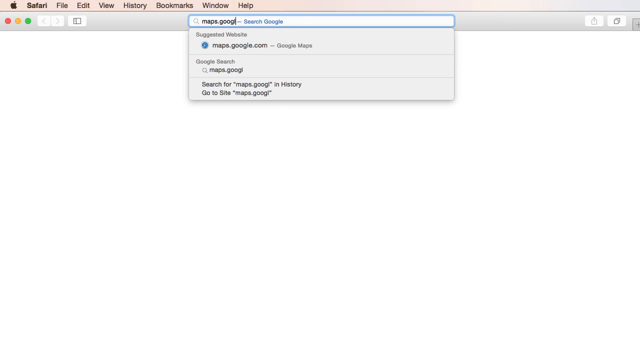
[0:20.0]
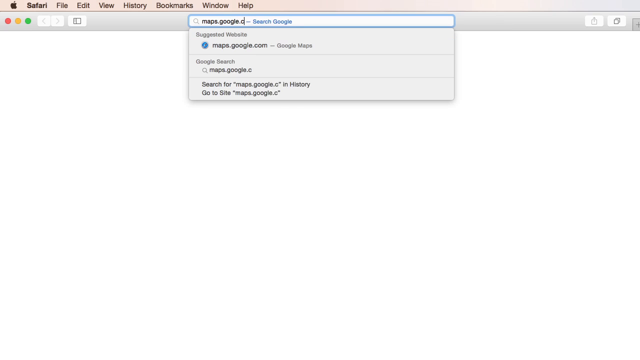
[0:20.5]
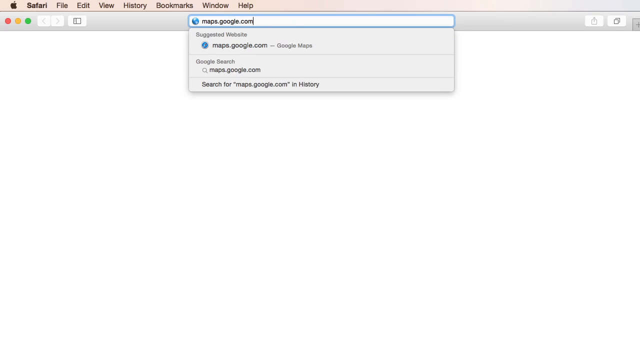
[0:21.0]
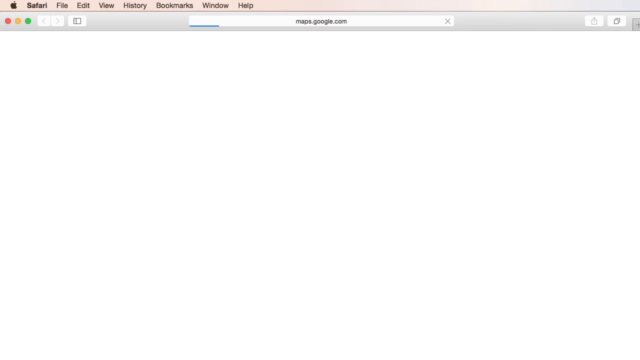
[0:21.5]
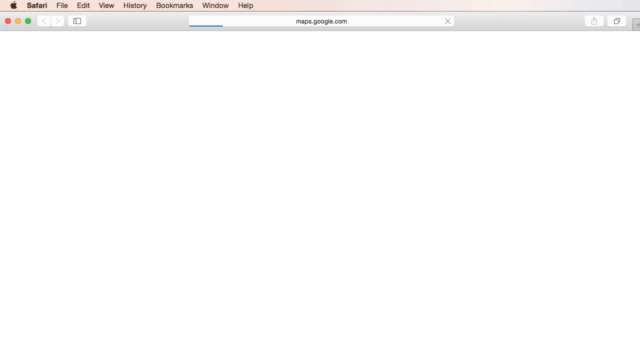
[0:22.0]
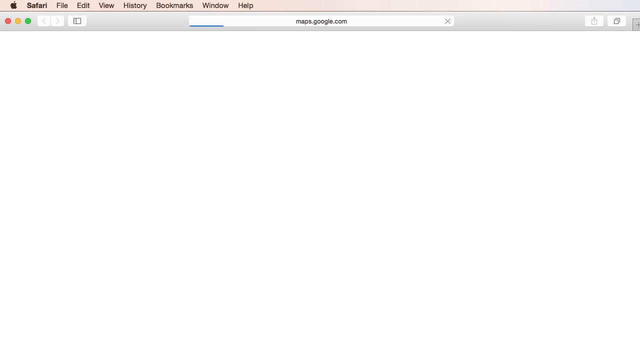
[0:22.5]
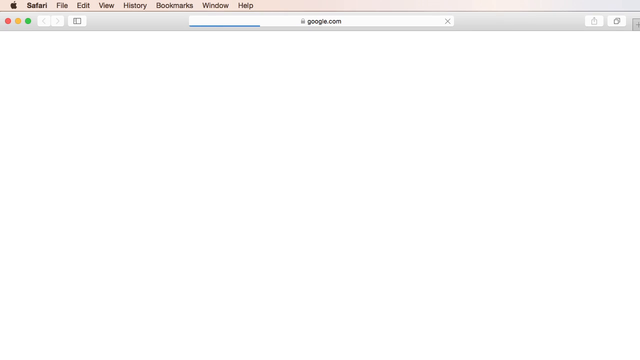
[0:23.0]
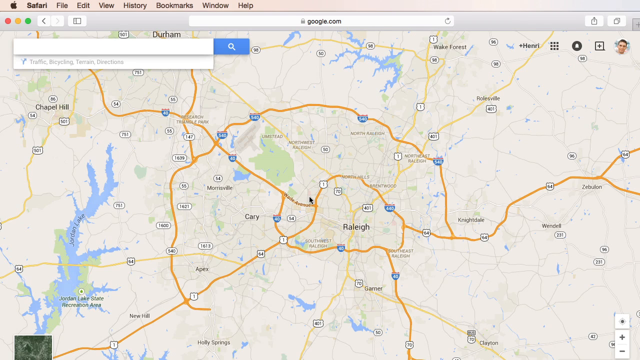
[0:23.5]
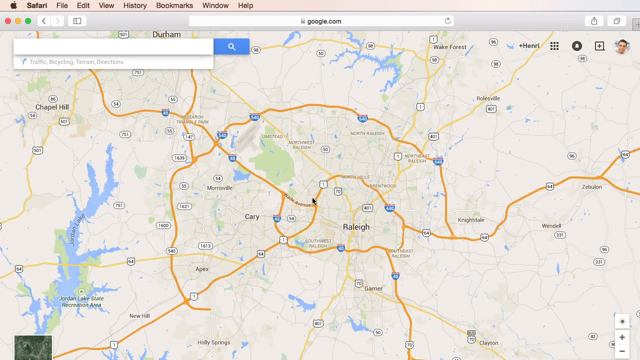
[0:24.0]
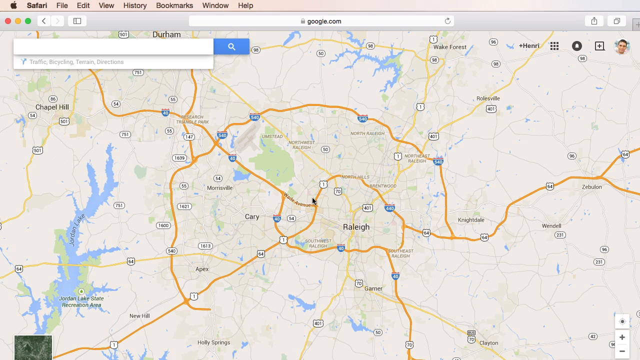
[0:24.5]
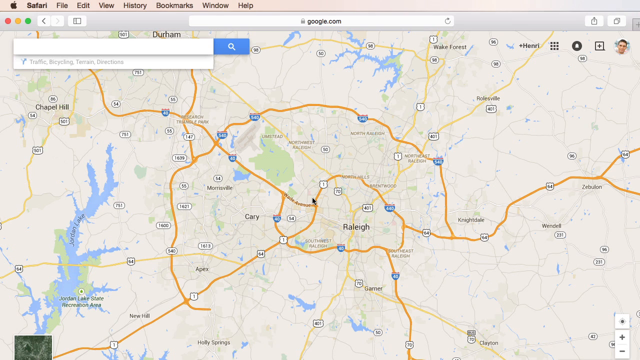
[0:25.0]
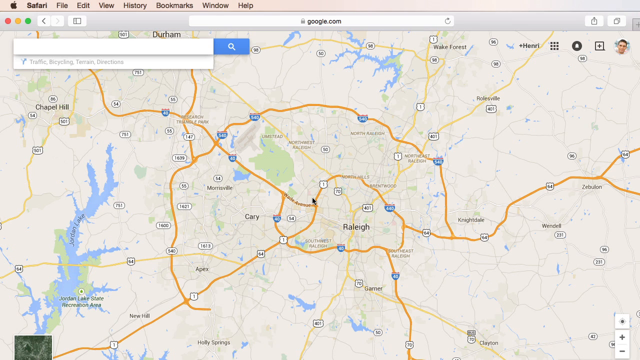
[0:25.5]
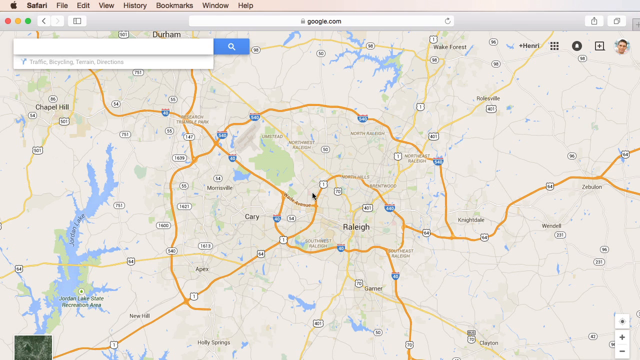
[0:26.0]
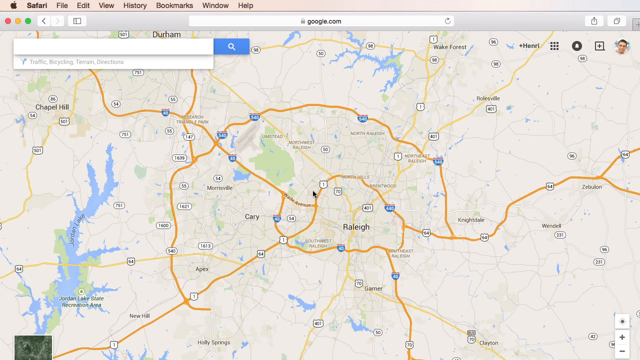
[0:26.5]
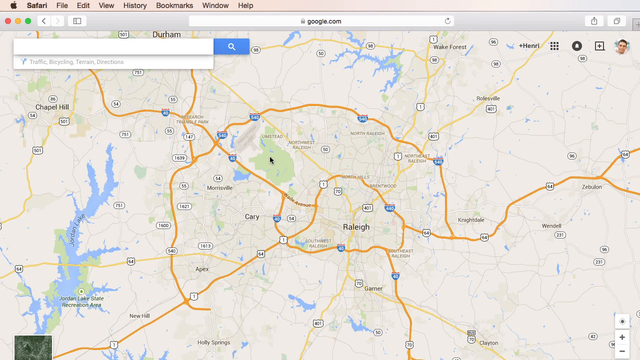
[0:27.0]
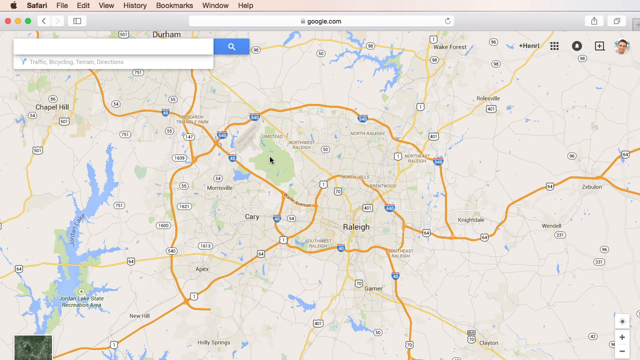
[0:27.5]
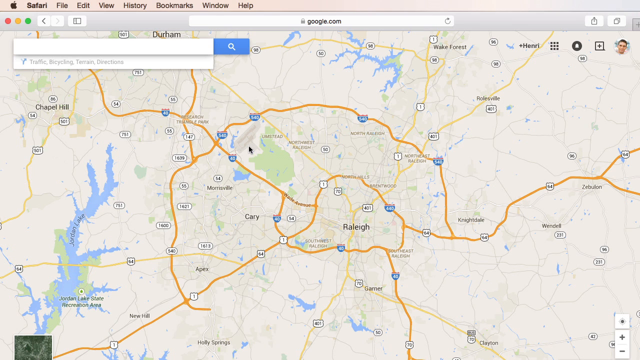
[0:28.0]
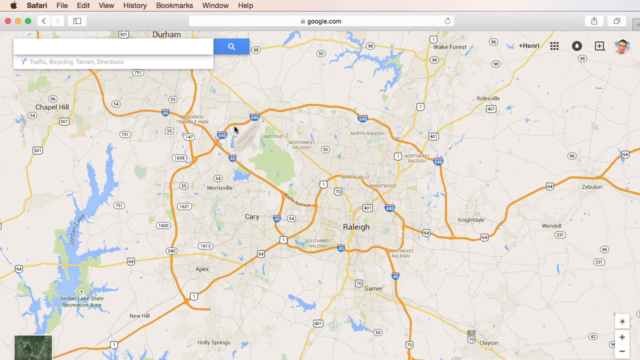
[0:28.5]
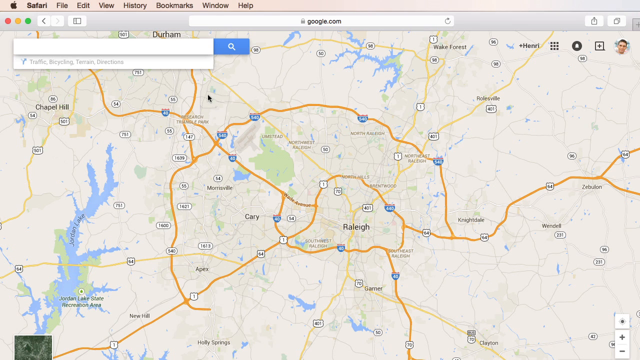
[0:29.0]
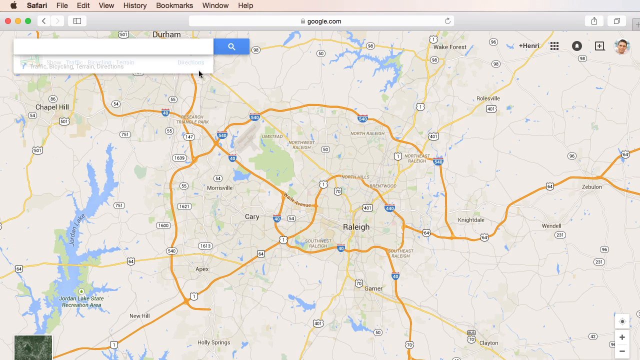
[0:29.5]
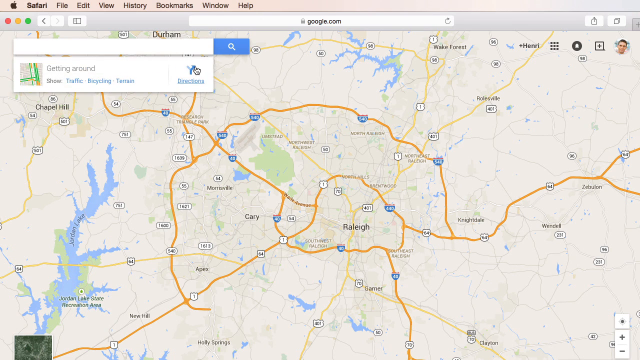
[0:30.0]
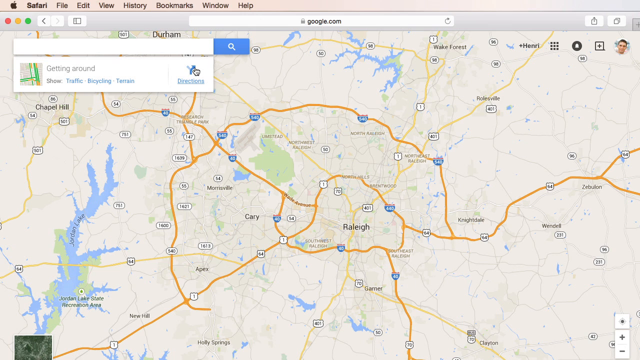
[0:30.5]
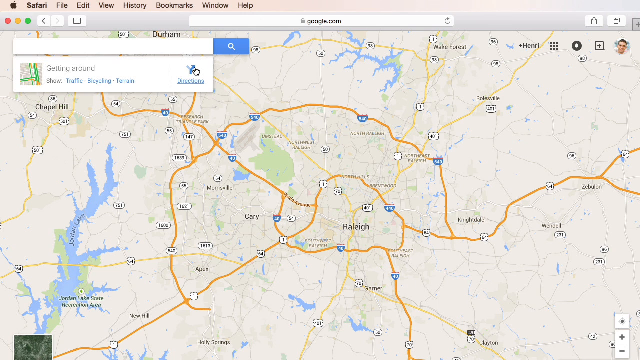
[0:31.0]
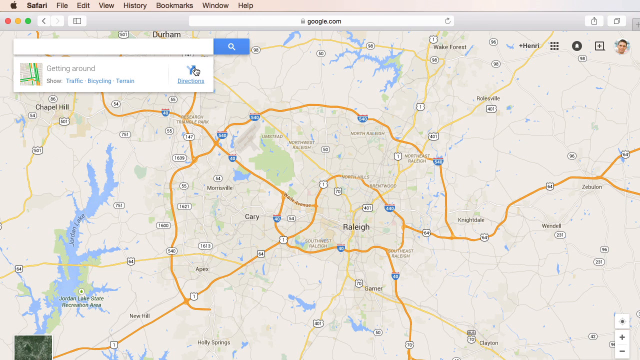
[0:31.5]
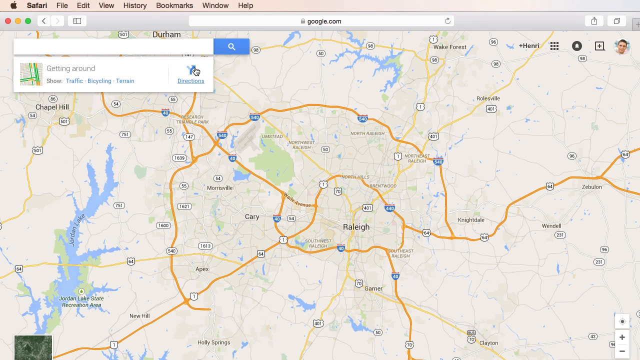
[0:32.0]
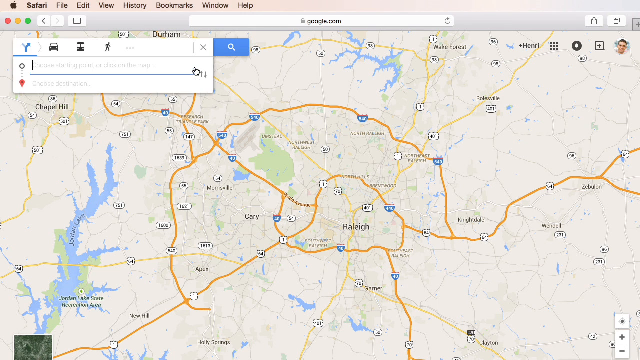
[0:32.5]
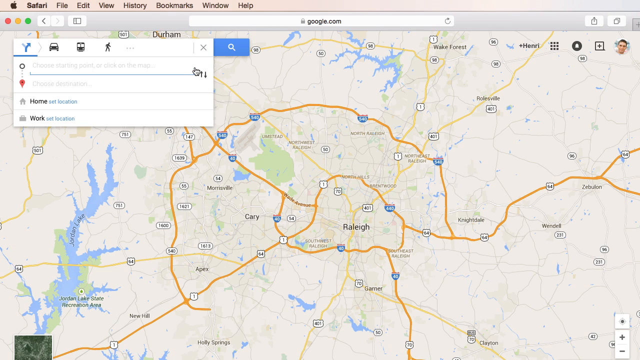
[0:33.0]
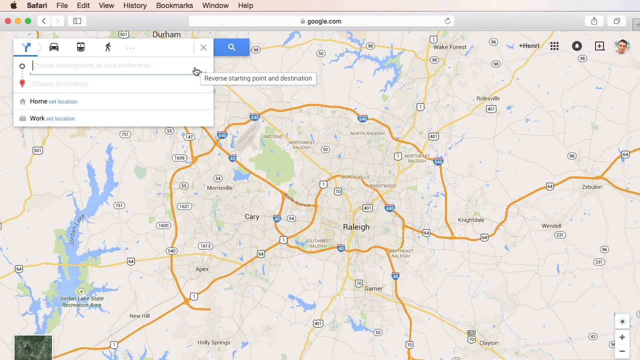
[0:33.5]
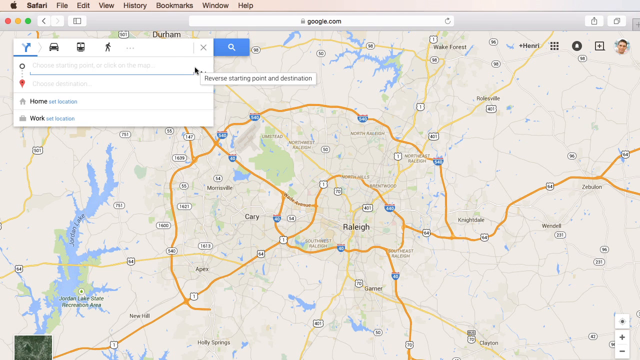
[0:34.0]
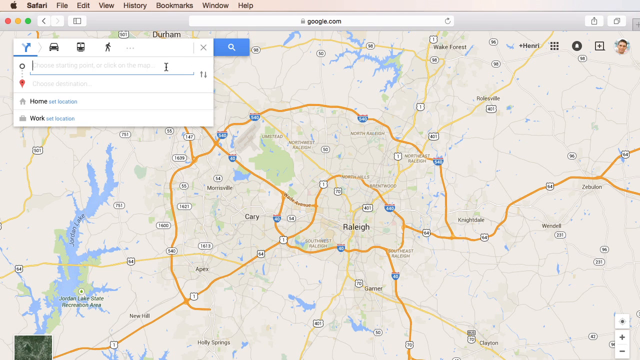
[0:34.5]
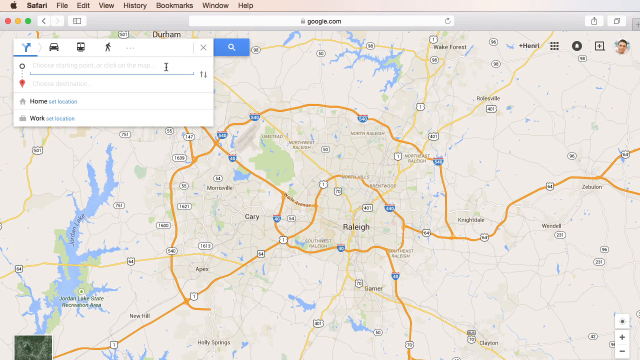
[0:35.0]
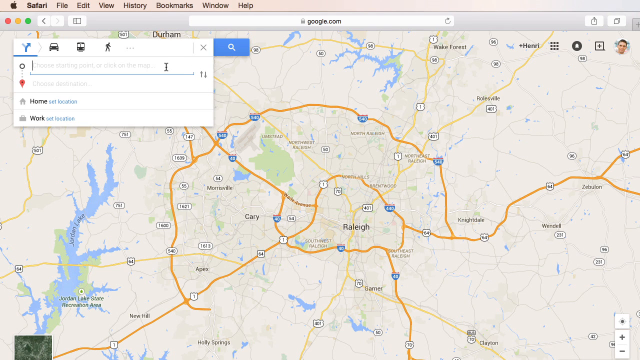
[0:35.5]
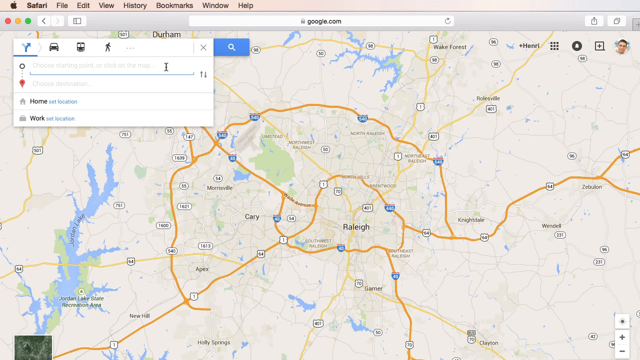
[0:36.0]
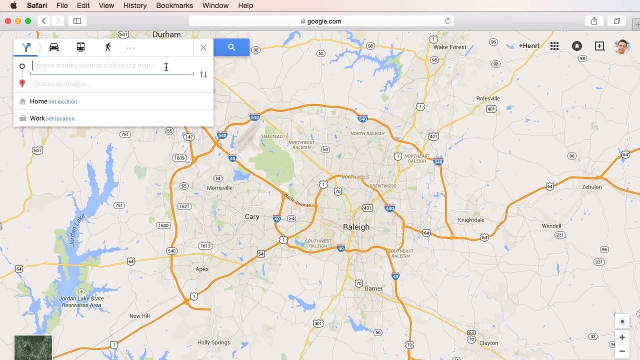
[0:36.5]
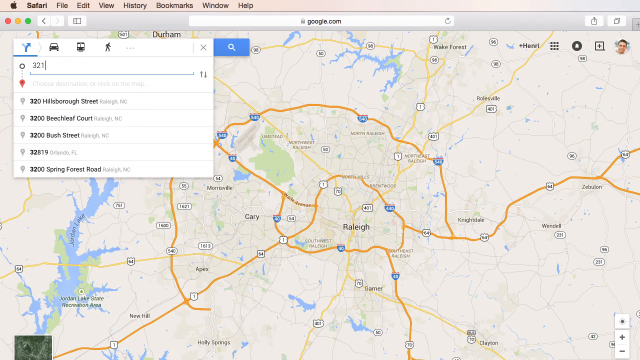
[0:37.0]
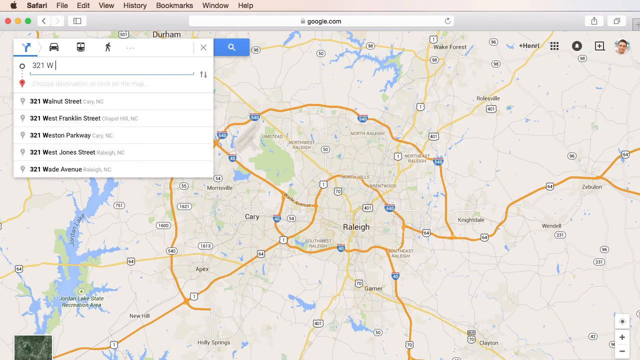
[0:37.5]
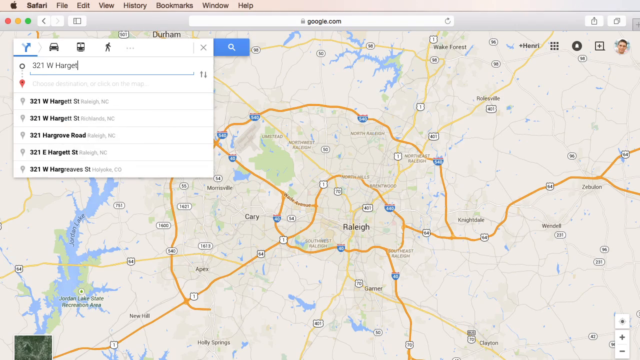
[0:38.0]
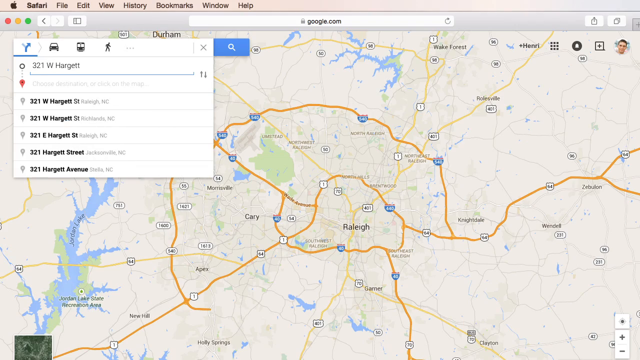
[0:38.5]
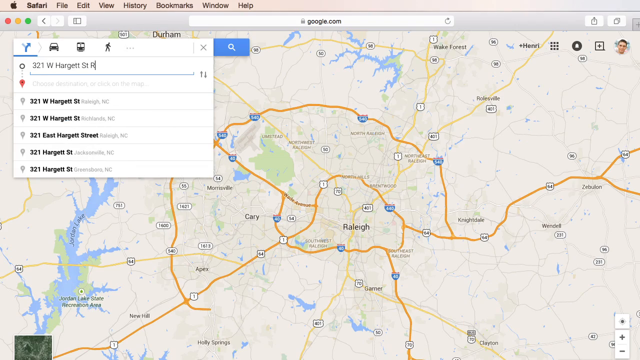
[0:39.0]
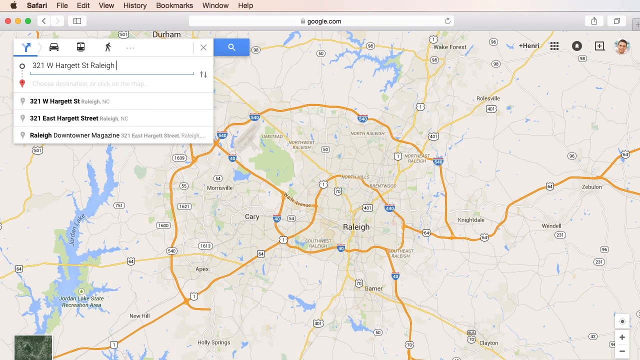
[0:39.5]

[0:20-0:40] A Safari web browser is open with a tan title bar and the options File, Edit, View, History, Bookmarks, Window, and Help at the top. Beneath these options is the address bar, where the web address maps.google.com is typed out letter by letter. Entering it loads Google Maps, showing a map of Raleigh next to Cary and Chapel Hill and other nearby settlements. The user clicks the getting around option and types a destination, 321 West Hargrett Street in Raleigh, North Carolina, into the destination field to get directions to that street.